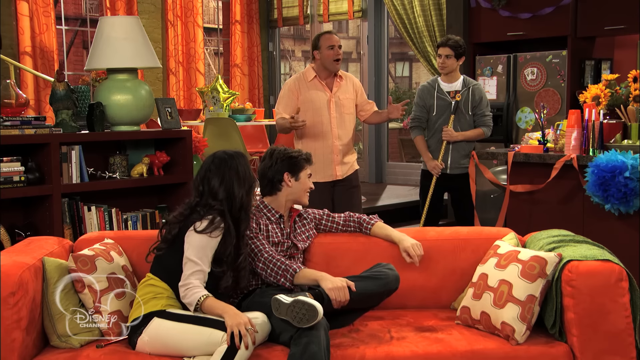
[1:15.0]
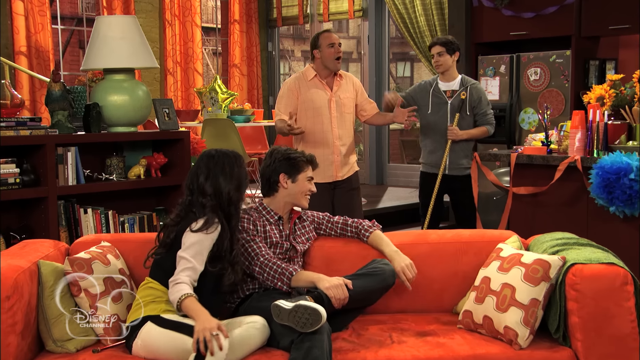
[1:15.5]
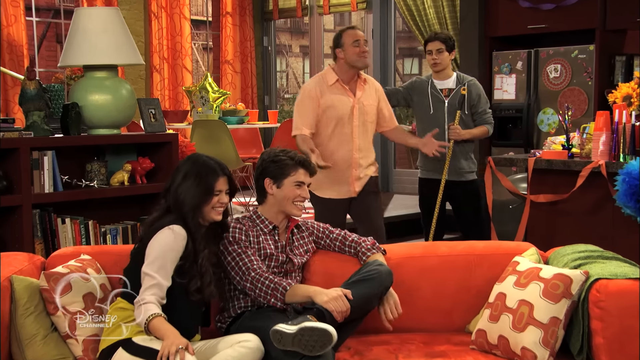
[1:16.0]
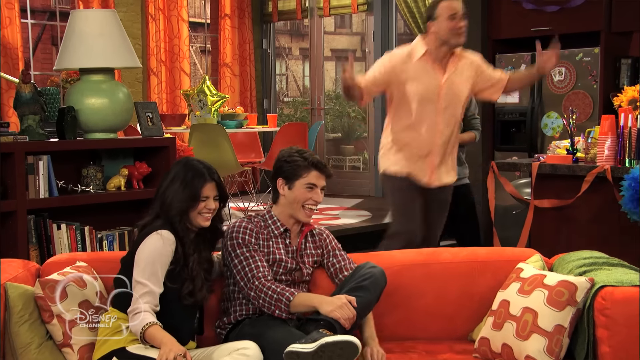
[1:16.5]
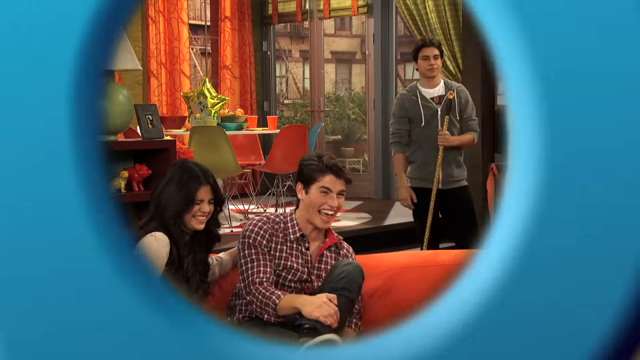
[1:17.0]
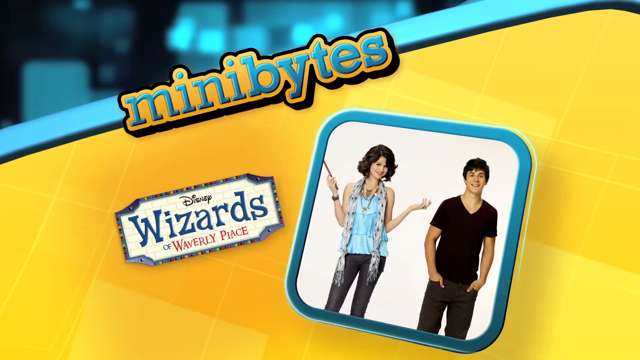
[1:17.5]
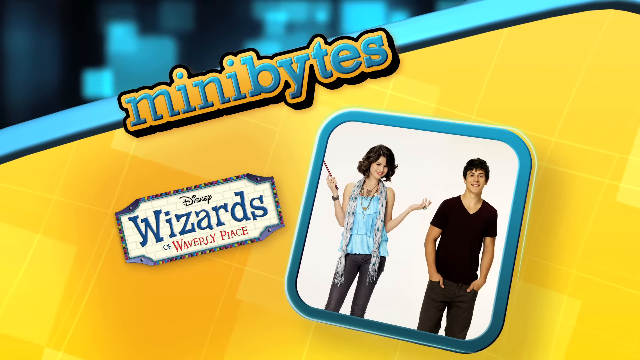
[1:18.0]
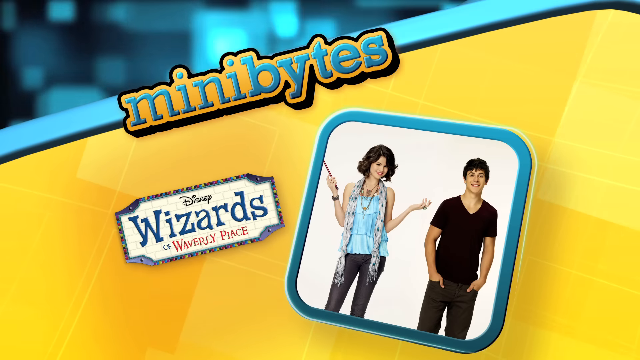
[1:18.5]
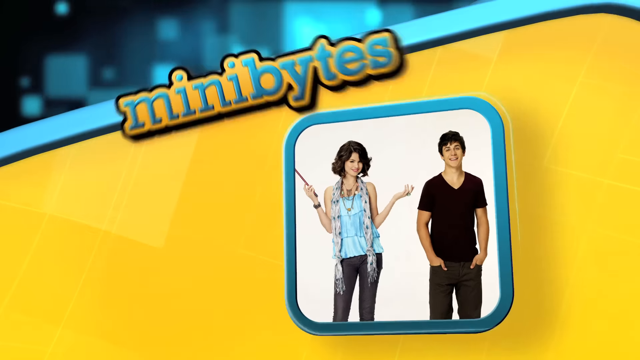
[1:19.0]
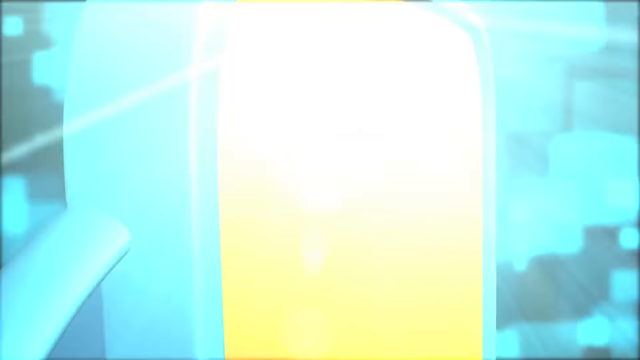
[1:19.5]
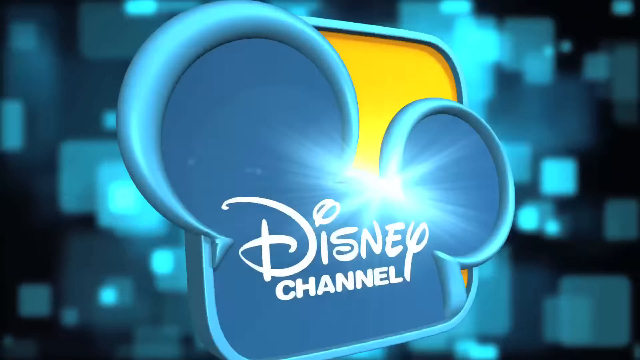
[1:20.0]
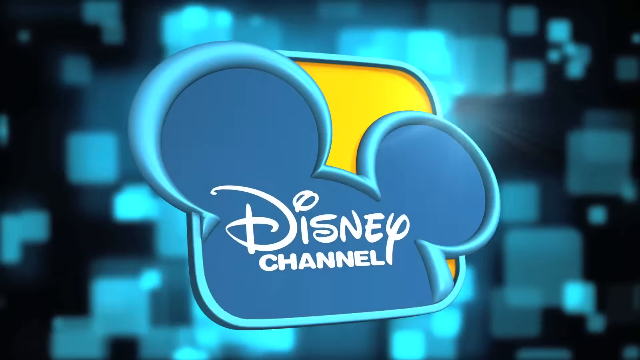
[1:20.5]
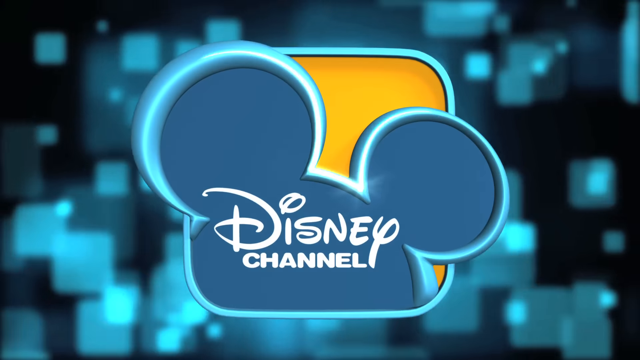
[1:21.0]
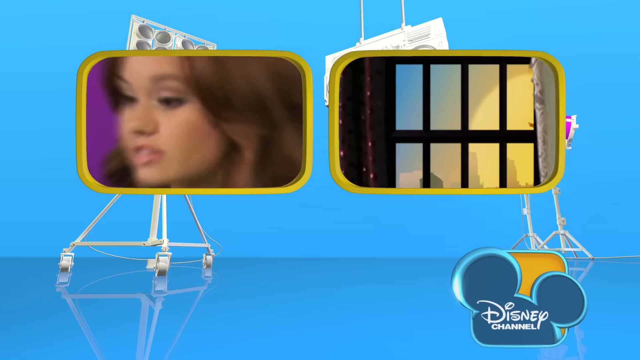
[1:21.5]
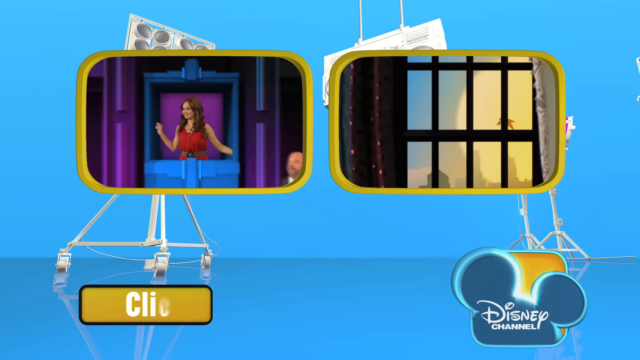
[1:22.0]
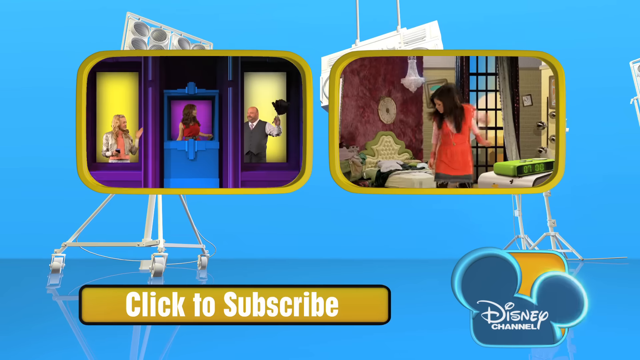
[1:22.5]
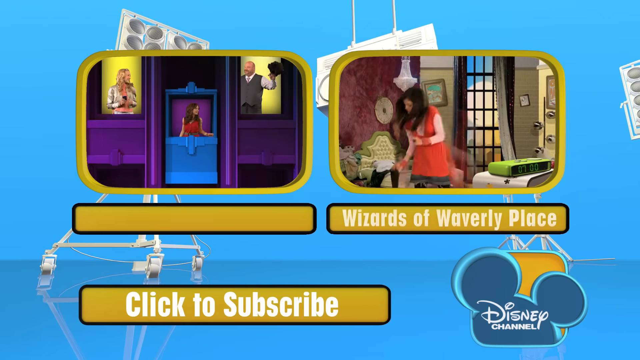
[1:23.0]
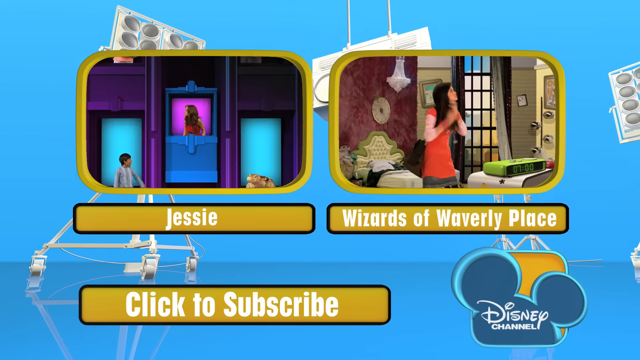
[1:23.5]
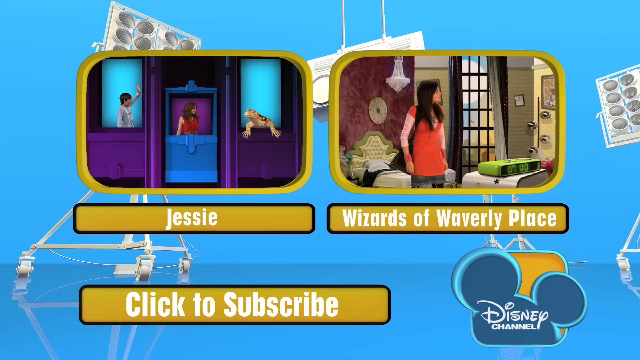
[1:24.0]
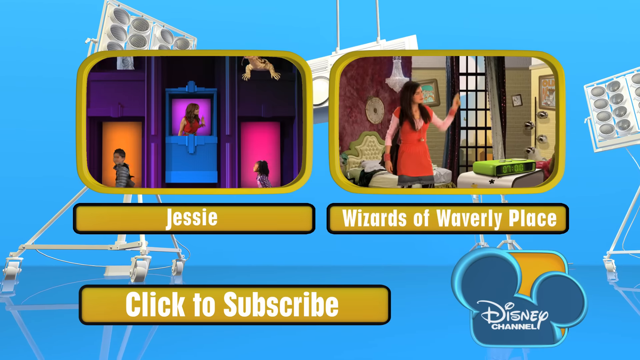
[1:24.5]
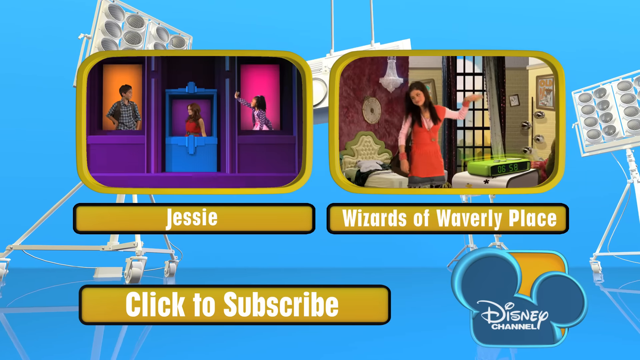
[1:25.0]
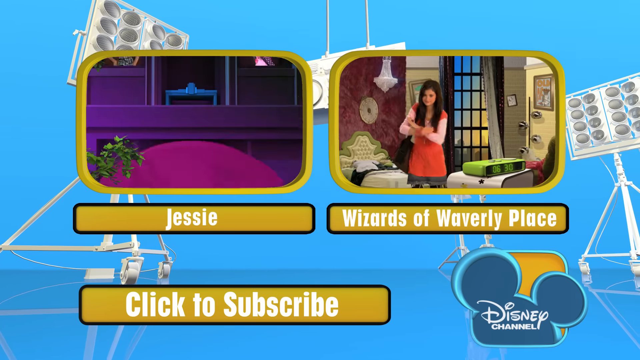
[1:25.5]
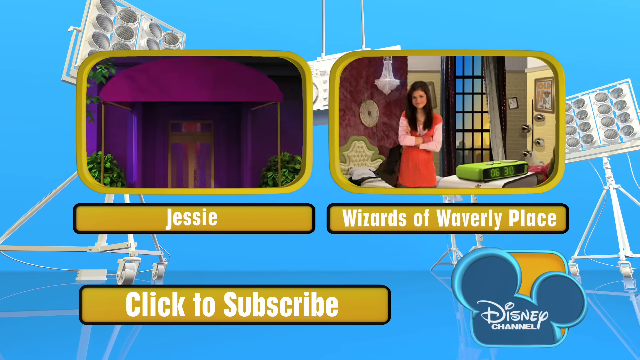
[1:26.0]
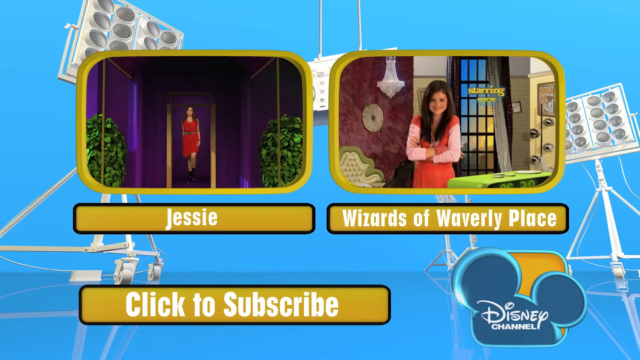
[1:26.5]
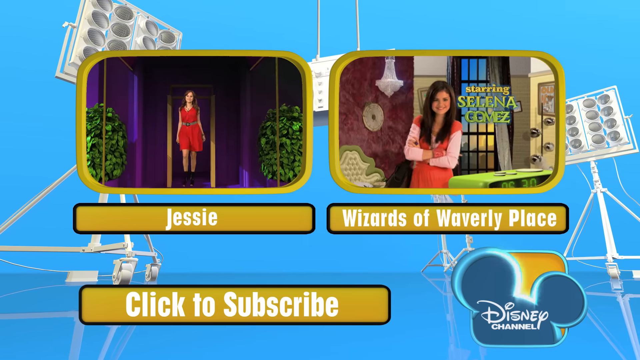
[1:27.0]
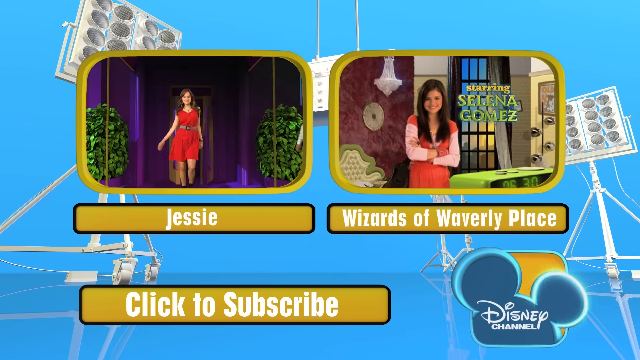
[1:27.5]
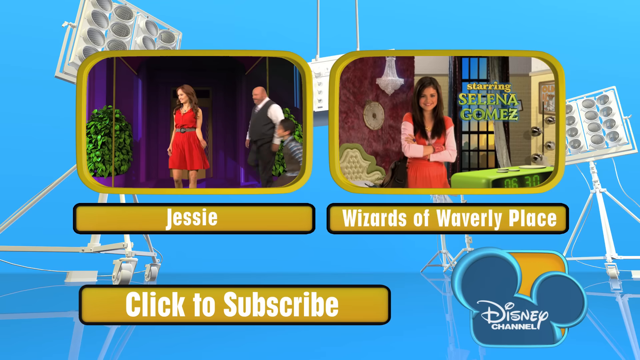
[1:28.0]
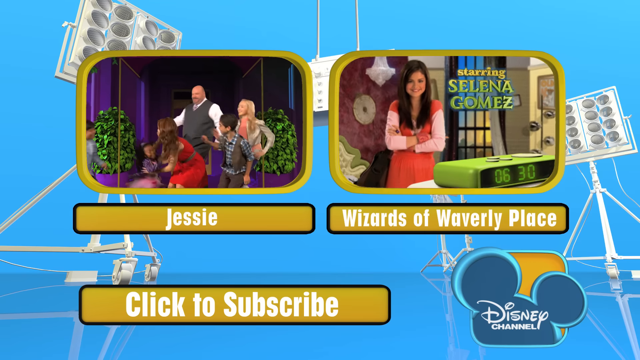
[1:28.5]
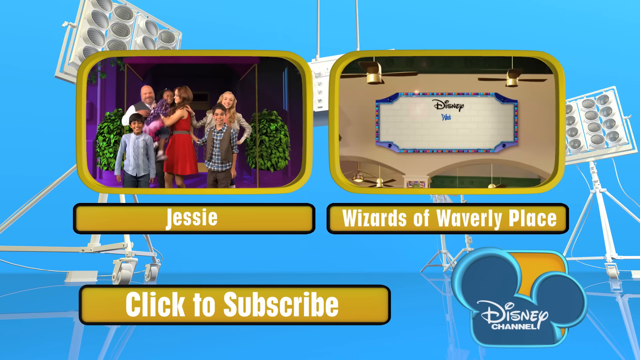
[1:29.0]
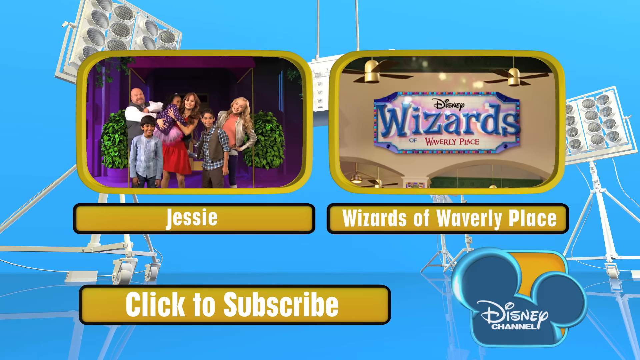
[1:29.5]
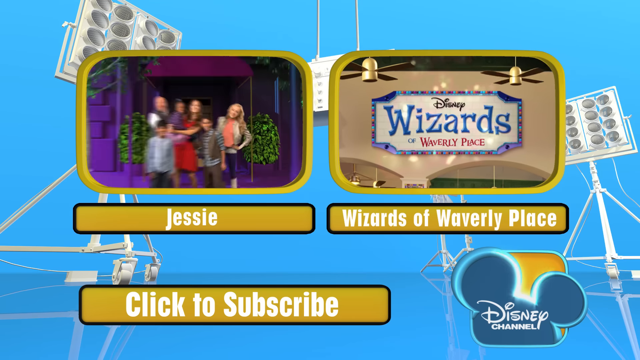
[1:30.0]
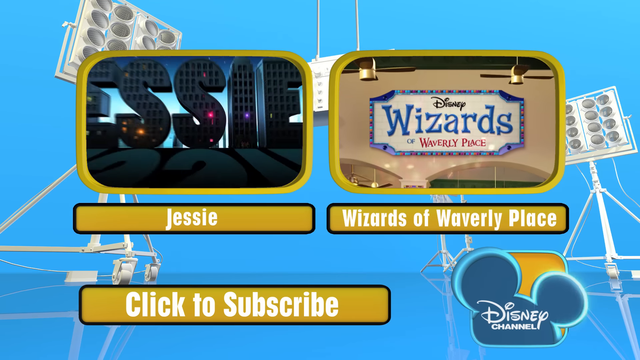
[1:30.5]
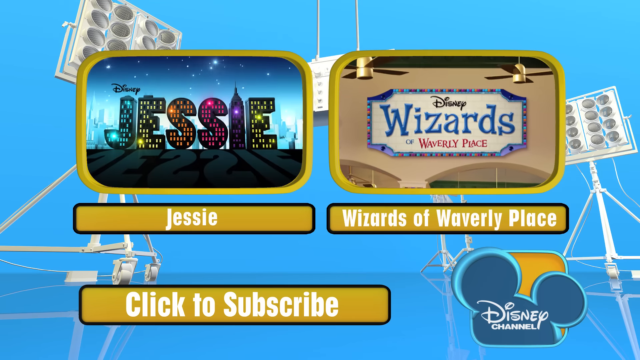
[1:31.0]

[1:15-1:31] The girl with black hair and the kid in the checkered shirt are sitting on an orange sofa, with the man in the orange collared polo shirt in the background and the kid in the gray zip-up jacket to his right holding a broom. The man in the orange jacket jumps up and goes to the right as all three of the other kids laugh. The scene changes to an ending screen with two characters of the show on the right in a white square outlined in blue. To the left it says "Disney Wizards of Waverly Place", and above, in light blue text with a yellow background and a black outline, it says "Mini Bites". That goes away, and the Disney Channel logo appears with the two Mickey Mouse ears. The end shows two other videos to click on: on the left, "Jesse" with a picture of three characters, and on the right, "Wizards of Waverly Place" with one character in an indoor setting. Both videos are moving, and the background is light blue.